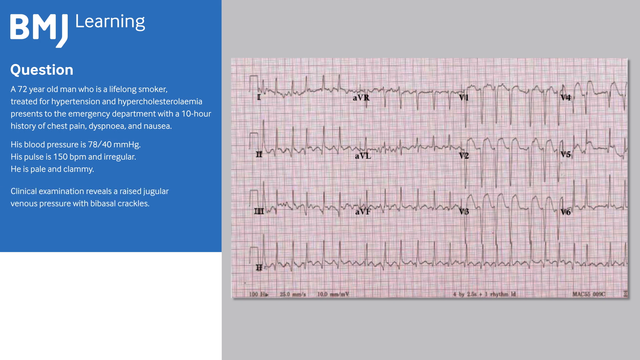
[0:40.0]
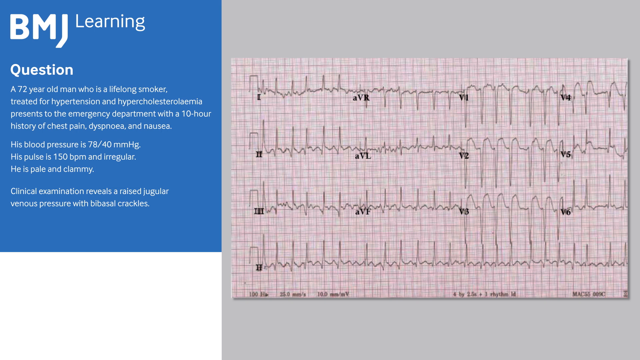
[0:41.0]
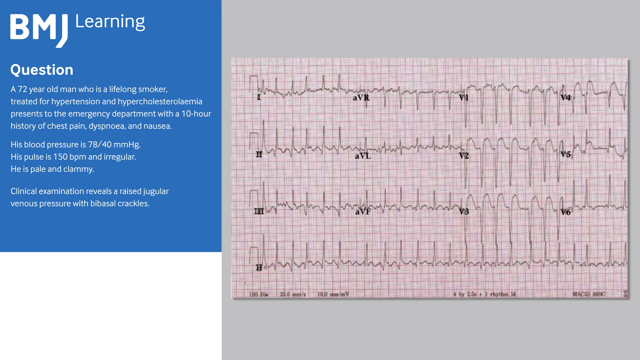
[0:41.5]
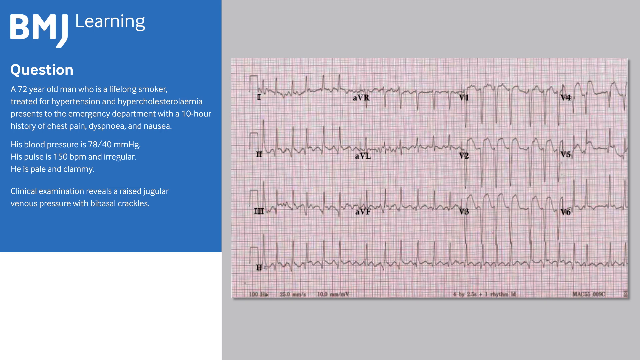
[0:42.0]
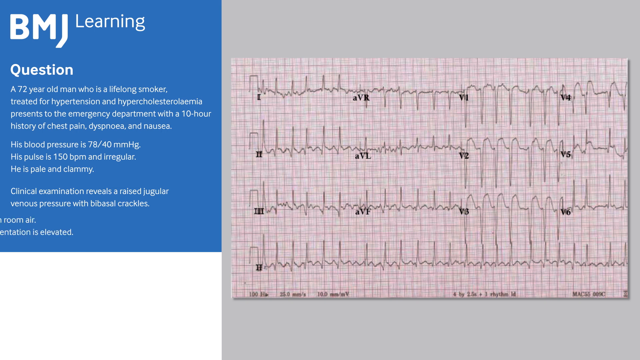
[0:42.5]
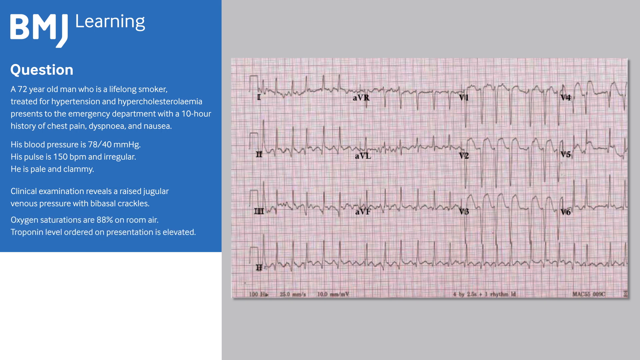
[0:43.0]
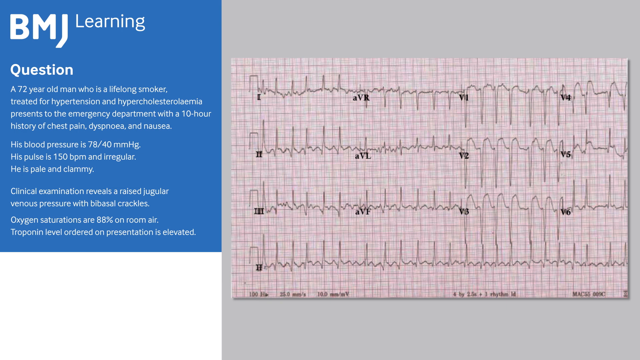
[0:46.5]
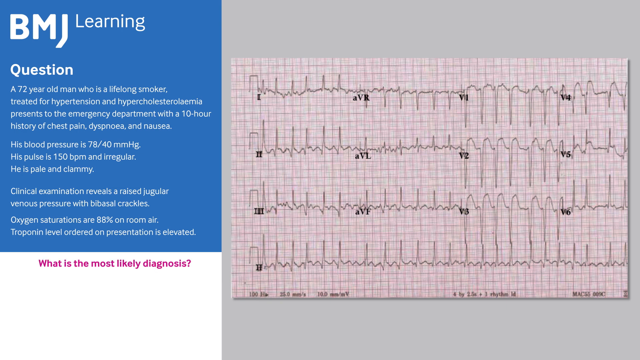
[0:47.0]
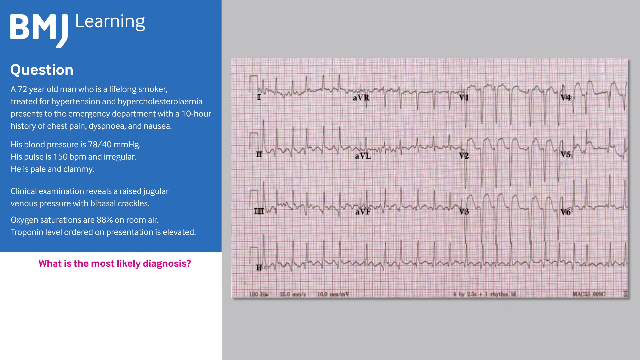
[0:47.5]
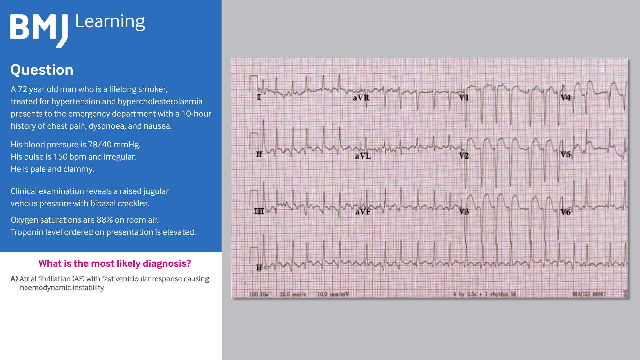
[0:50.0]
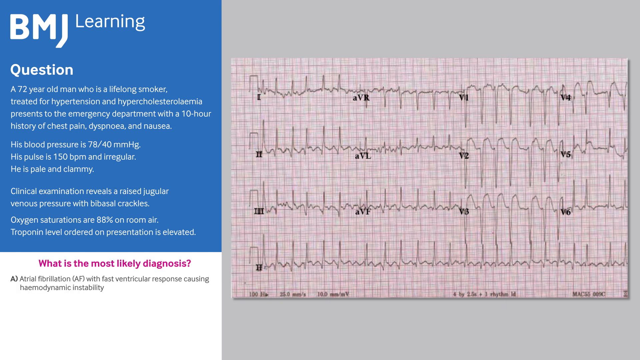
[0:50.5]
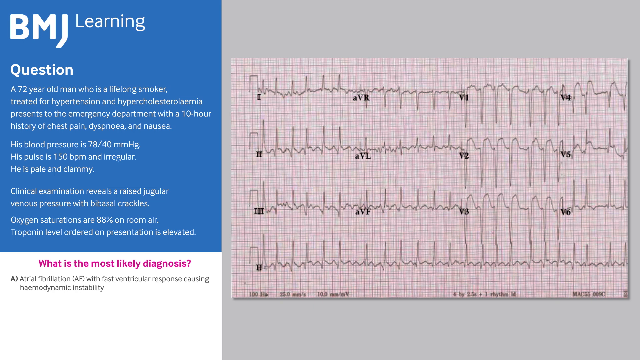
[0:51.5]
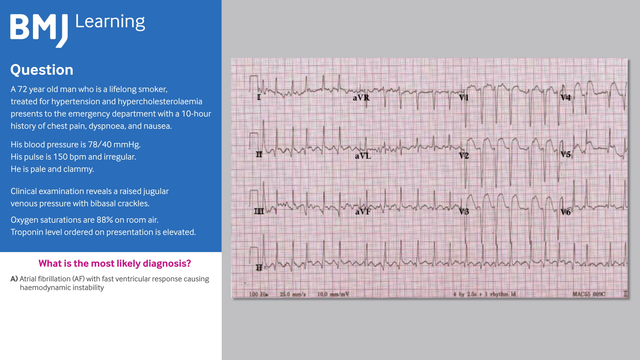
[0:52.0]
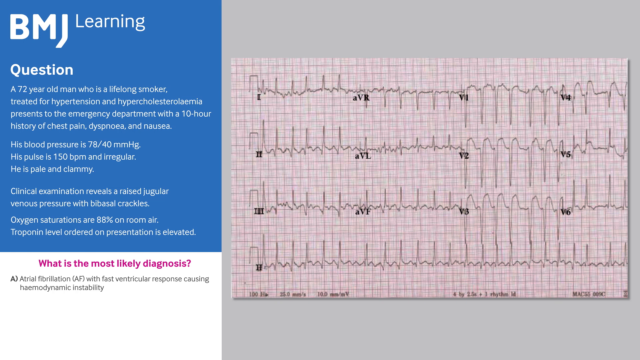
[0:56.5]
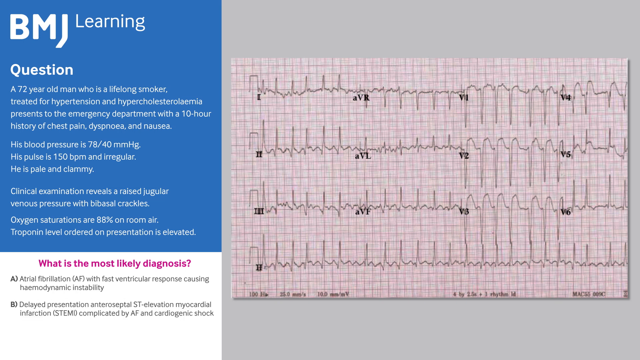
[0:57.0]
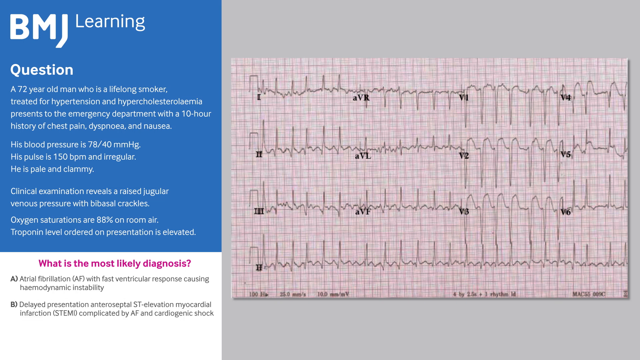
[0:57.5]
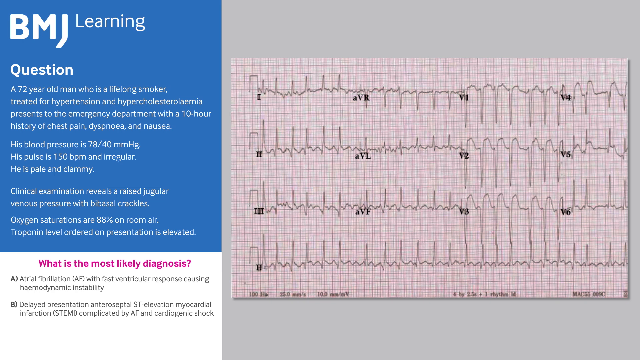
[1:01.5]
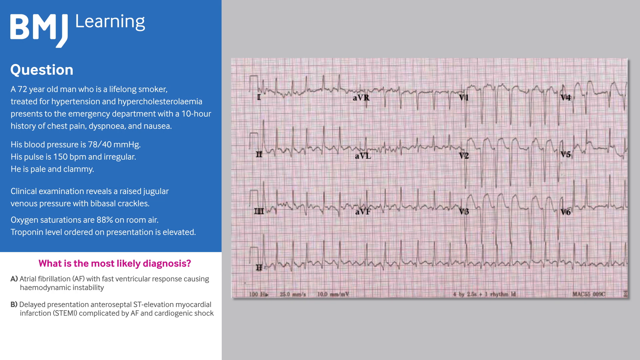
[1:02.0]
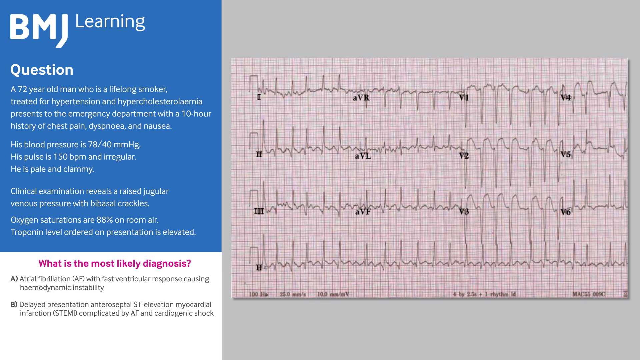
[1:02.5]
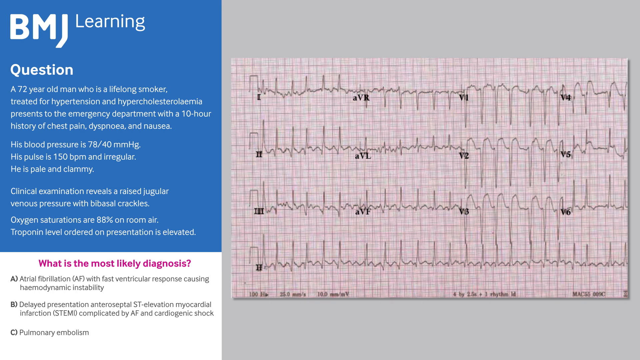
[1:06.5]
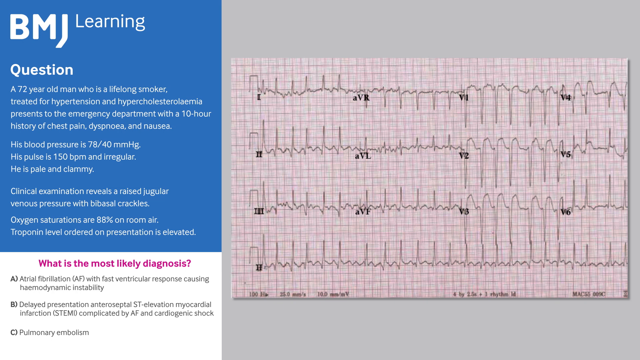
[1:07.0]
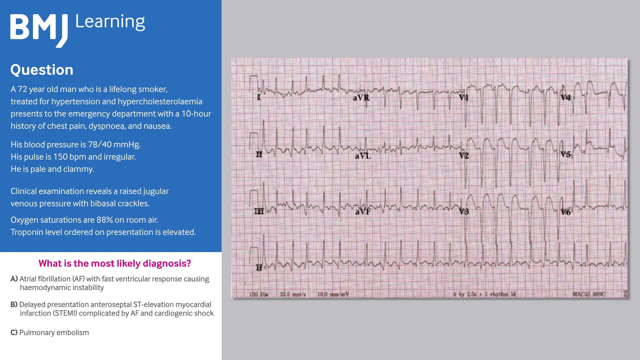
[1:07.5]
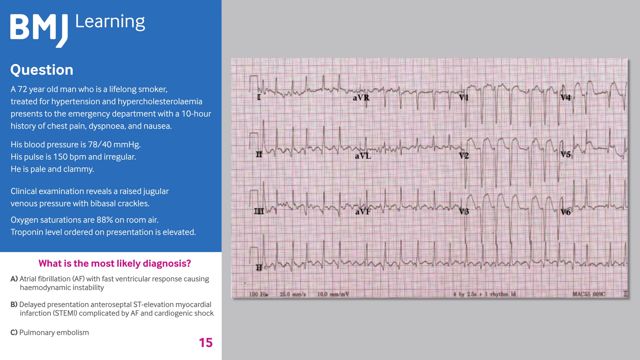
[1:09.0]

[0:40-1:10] One quarter of the screen is blue for three quarters of the way down, with white below it. The other three quarters of the screen show the ECG test results, a graph with squiggly lines indicating the heartbeats, labeled in black with the Roman numerals one, two, three and four, AVR, AVL and AVF, and V1 through V6. The previously shown text remains in white on the blue block. "What is the most likely diagnosis" is written in purple beneath the blue box, followed by answer text about atrial fibrillation that includes "AFib with fast ventricular response causing hemodynamic instability" and "delayed presentation". The text then disappears before it can all be read.